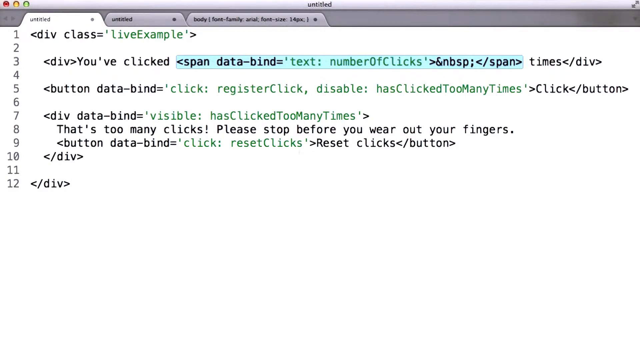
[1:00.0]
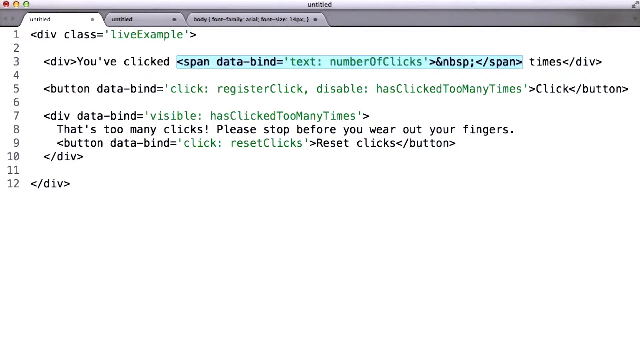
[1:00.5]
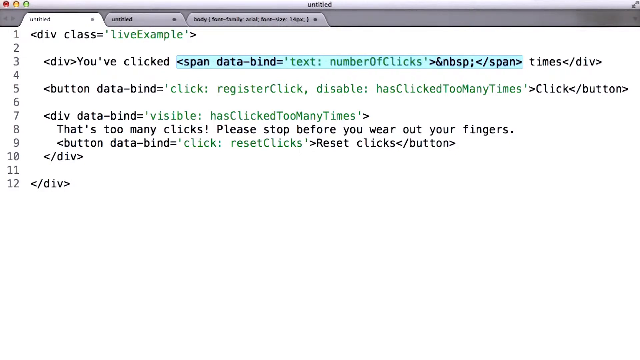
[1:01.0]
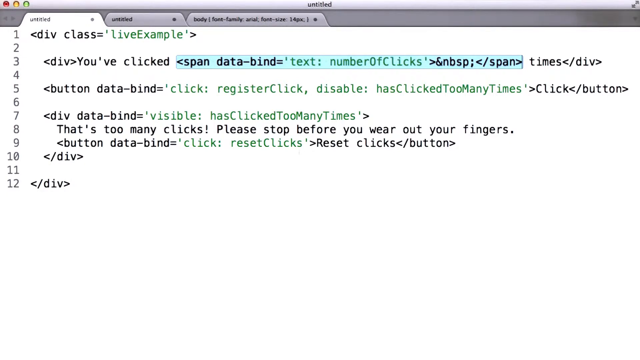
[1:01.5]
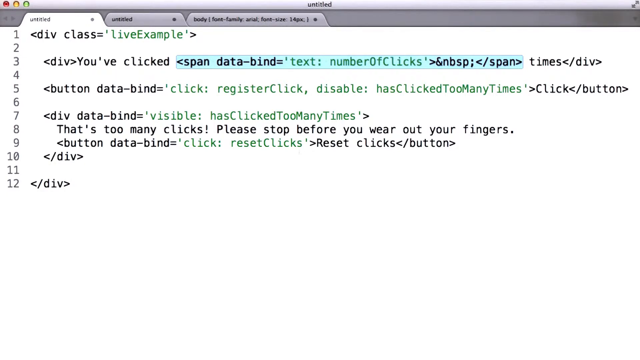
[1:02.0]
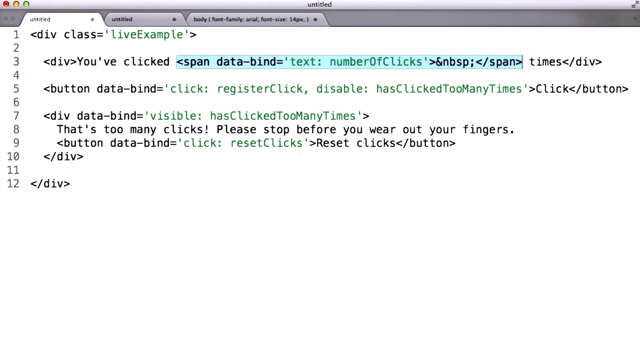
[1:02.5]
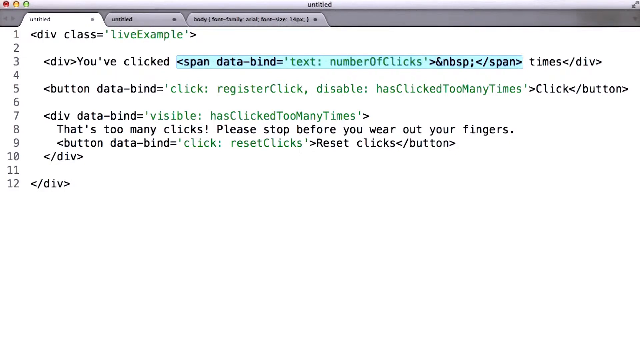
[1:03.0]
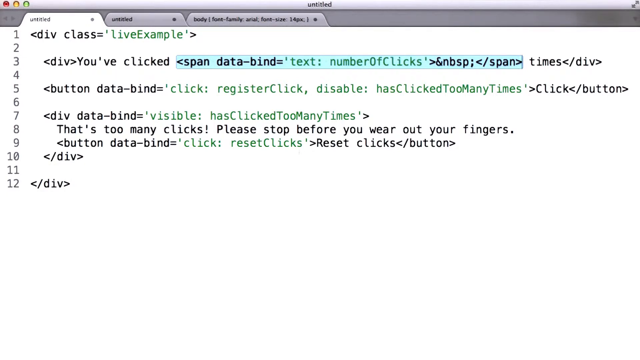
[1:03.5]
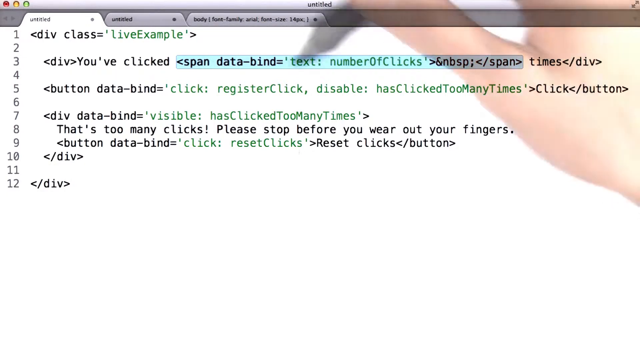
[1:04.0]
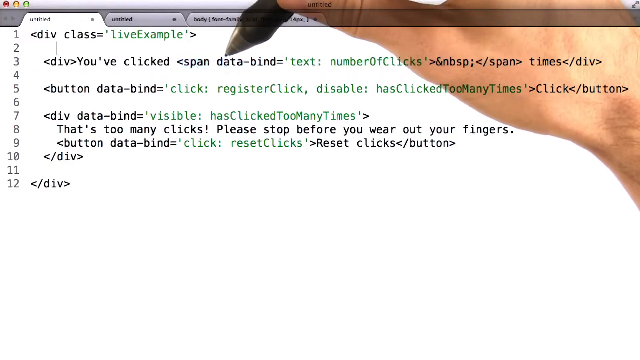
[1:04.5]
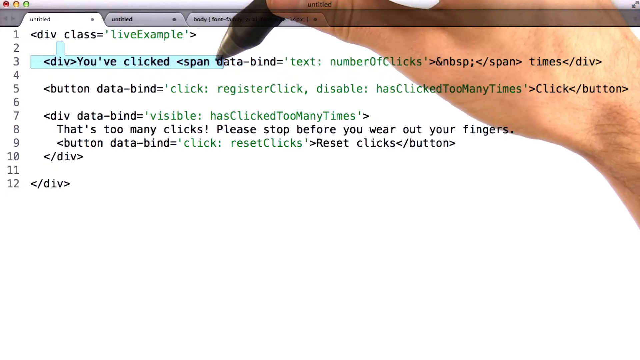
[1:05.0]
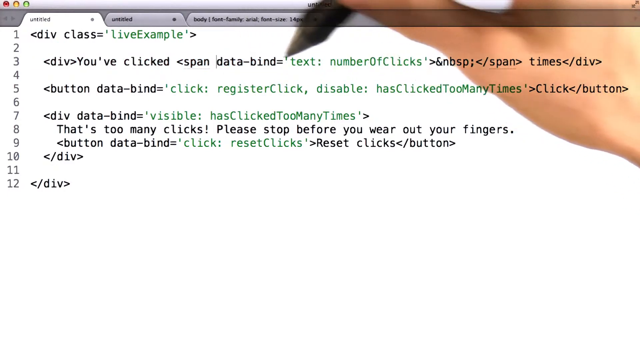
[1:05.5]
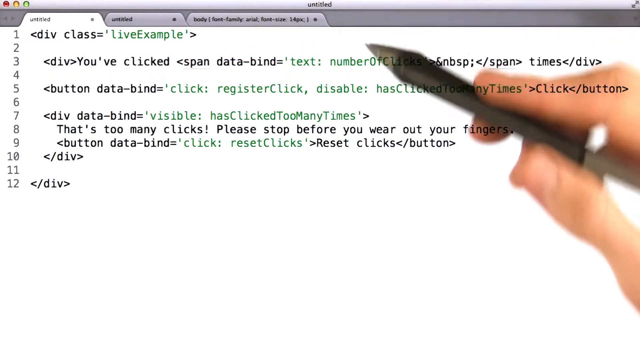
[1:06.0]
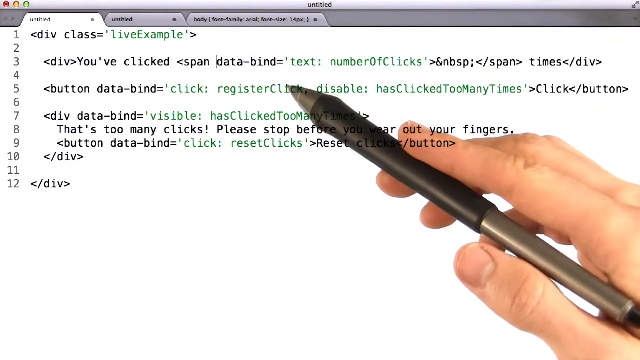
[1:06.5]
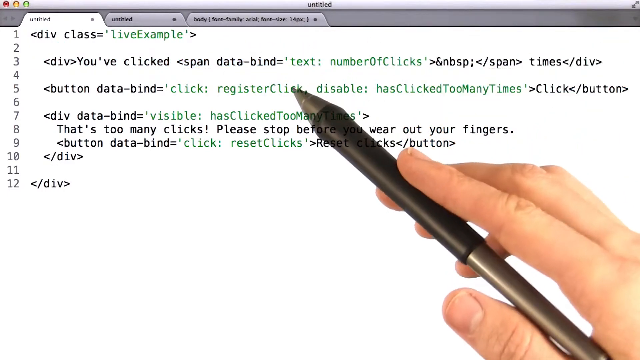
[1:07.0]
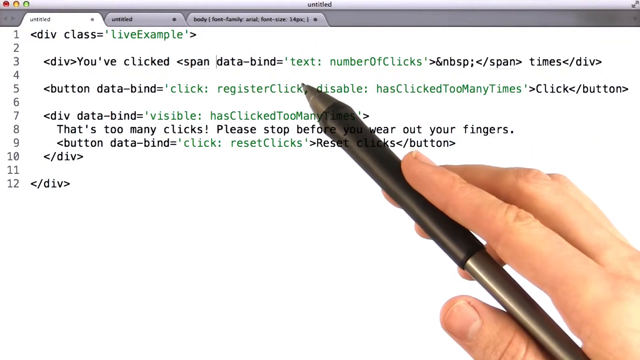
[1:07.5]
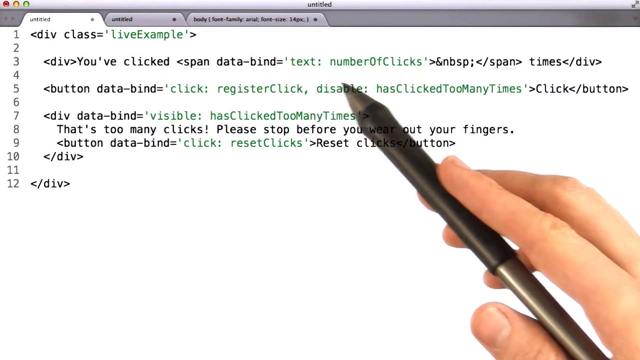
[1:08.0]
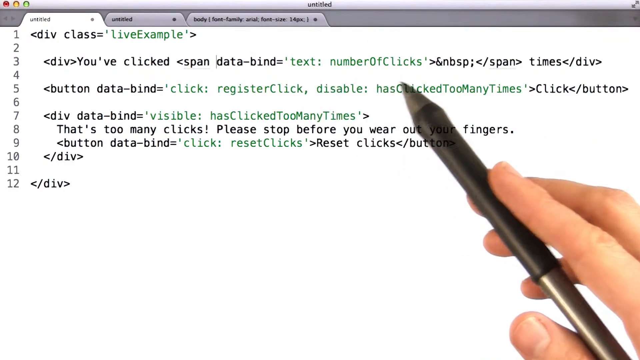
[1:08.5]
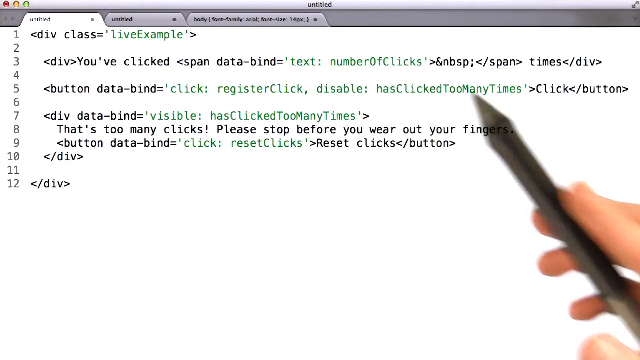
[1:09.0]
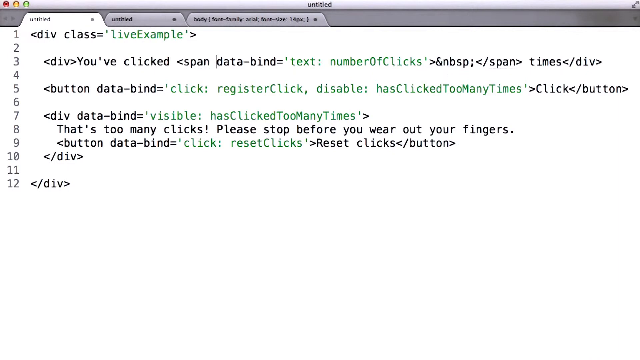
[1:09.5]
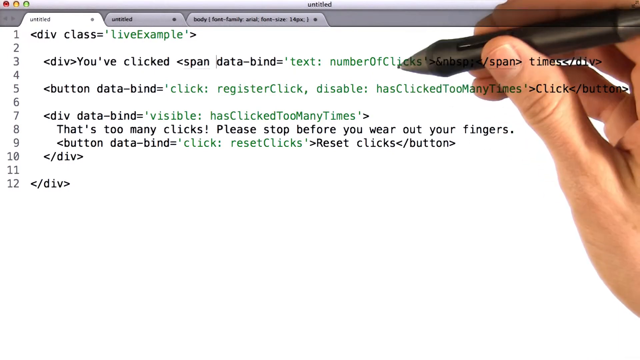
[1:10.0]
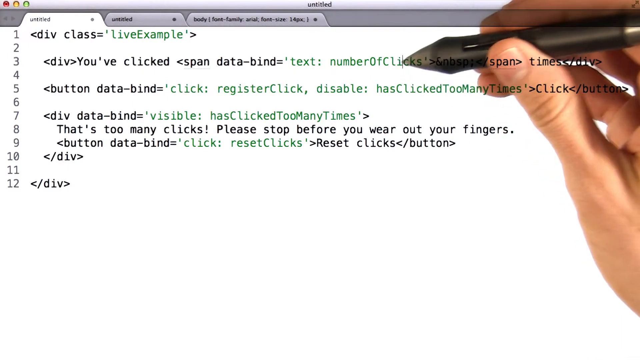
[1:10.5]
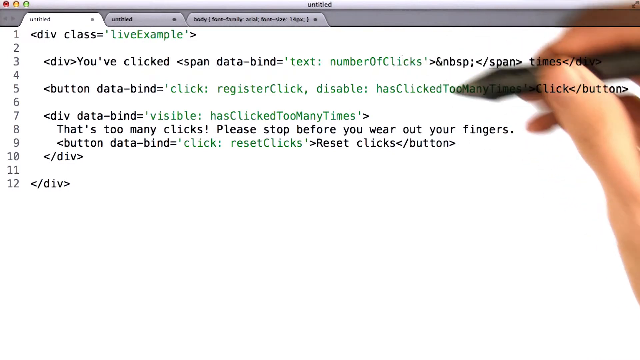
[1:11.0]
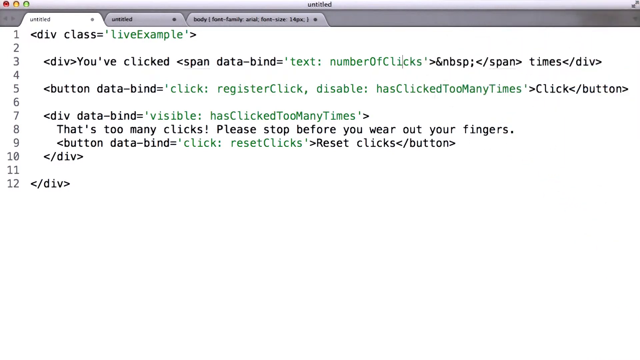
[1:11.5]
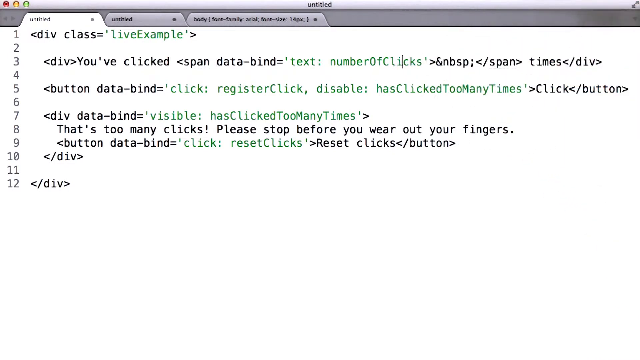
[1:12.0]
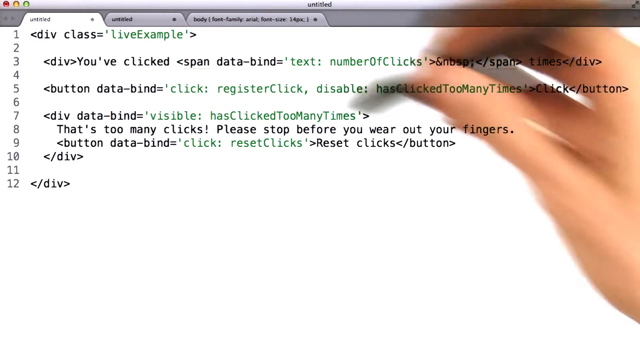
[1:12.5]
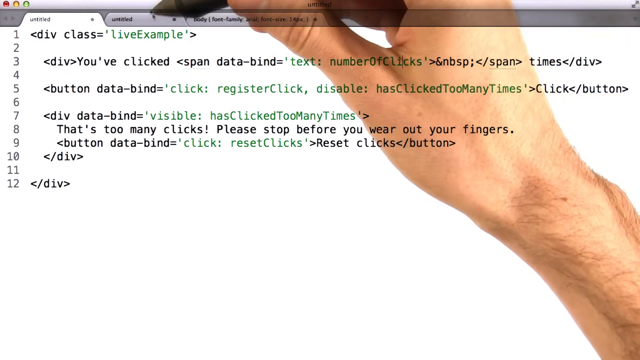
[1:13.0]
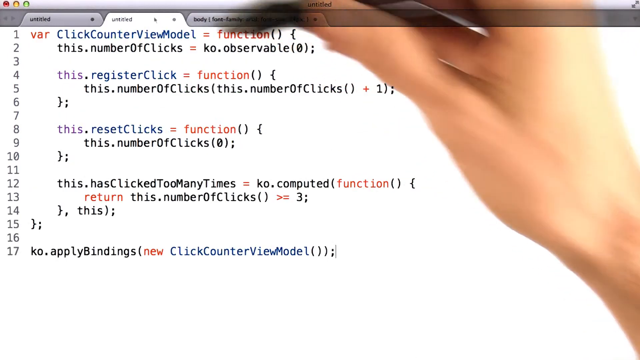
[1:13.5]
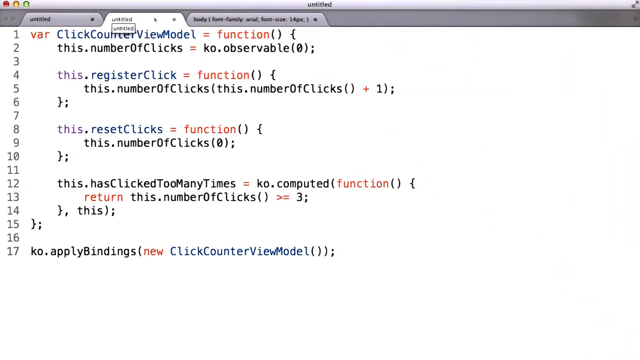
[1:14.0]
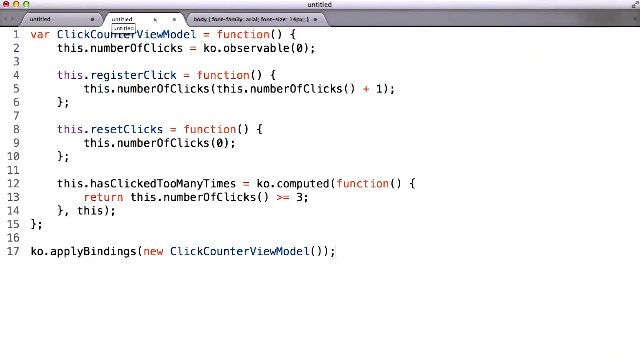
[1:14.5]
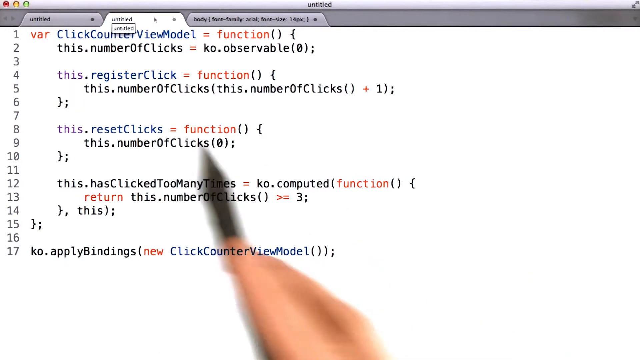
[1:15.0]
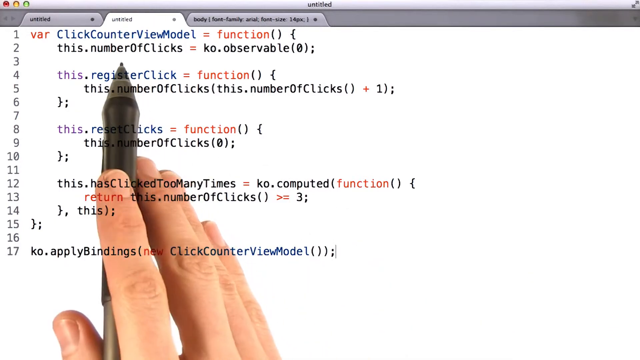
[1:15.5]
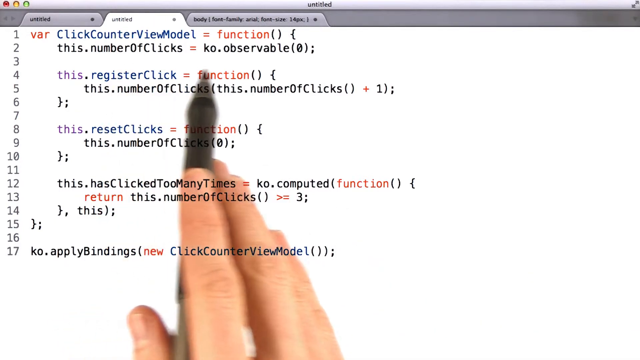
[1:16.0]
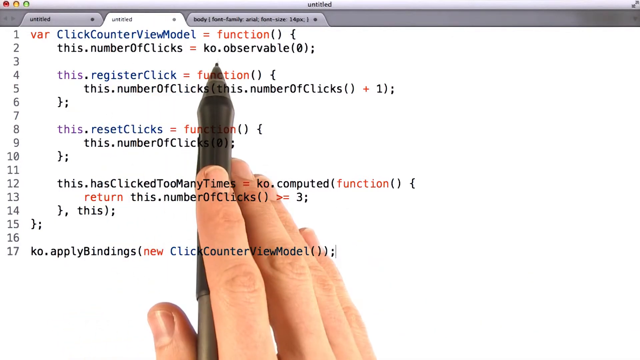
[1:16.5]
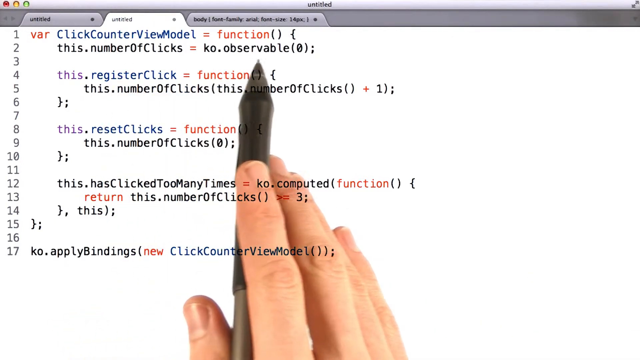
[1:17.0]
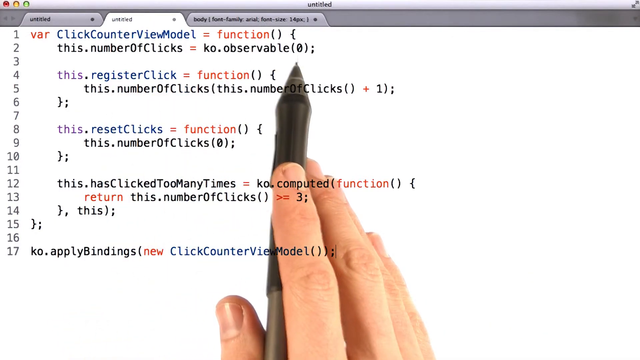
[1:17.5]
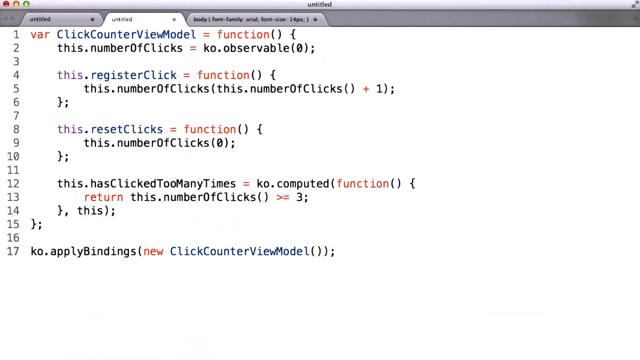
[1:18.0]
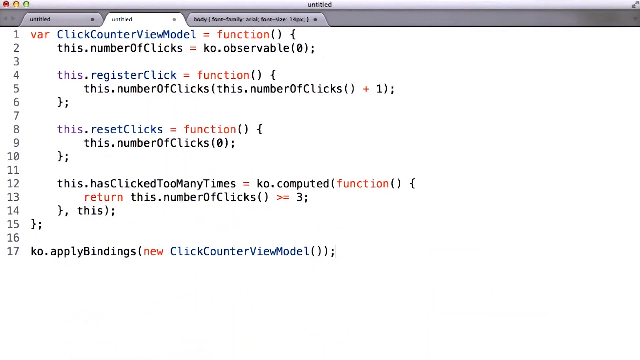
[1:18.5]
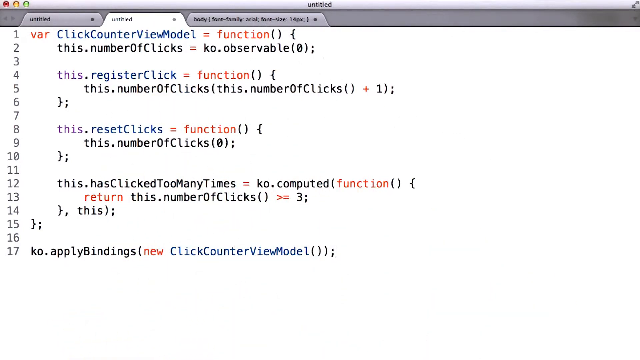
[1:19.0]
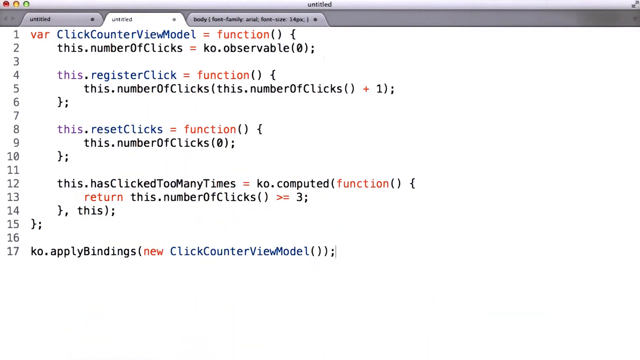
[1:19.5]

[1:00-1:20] "Expand data bind" is visible, and the hand appears again. The hand is transparent, as is the pen, which is a pointer-style pen rather than a writing pen. The code visible includes "register click", "disable: has clicked too many times", "visible: has clicked too many times", "That's too many clicks, please stop before you wear out your fingers", "number of clicks" and "button". This coding page shows how the too-many-clicks message on the button's page is created.